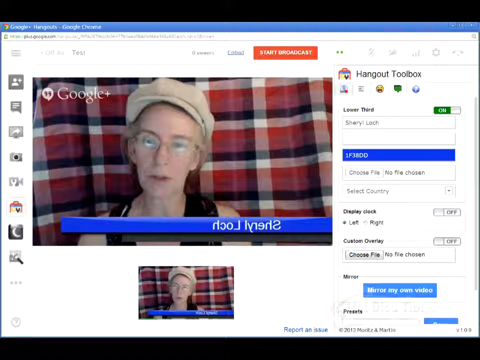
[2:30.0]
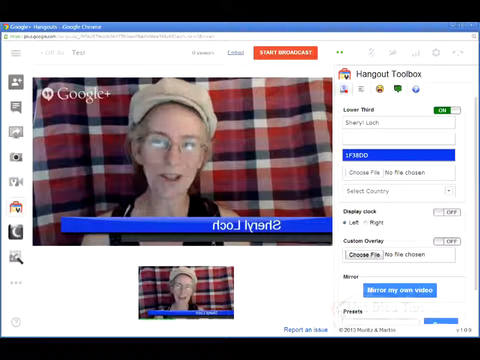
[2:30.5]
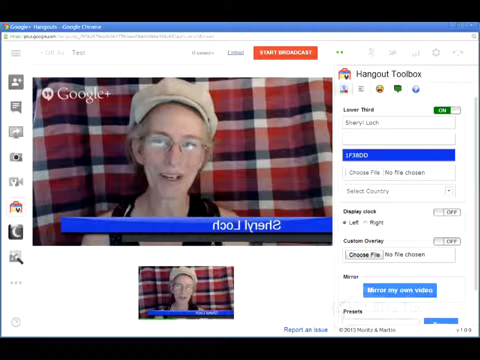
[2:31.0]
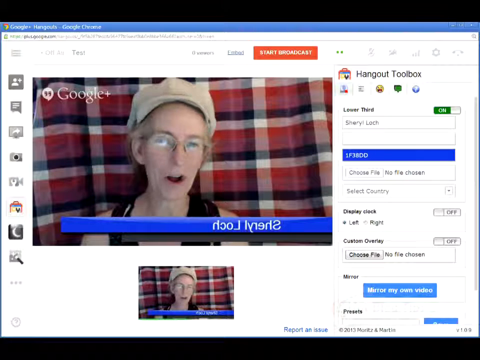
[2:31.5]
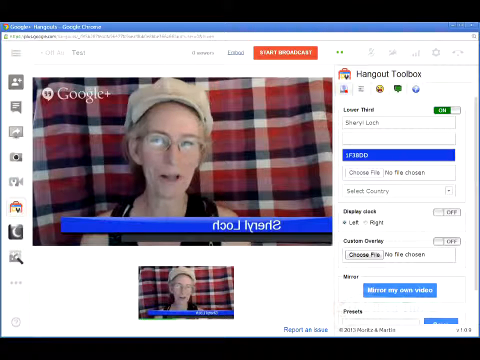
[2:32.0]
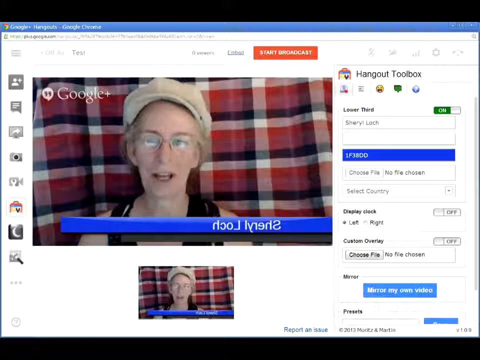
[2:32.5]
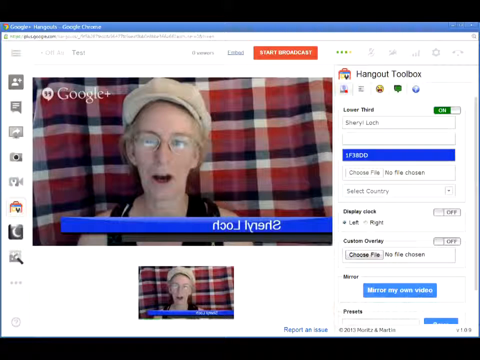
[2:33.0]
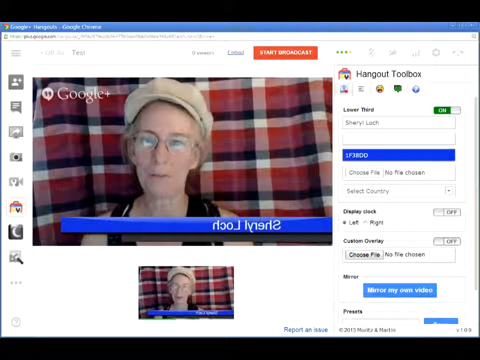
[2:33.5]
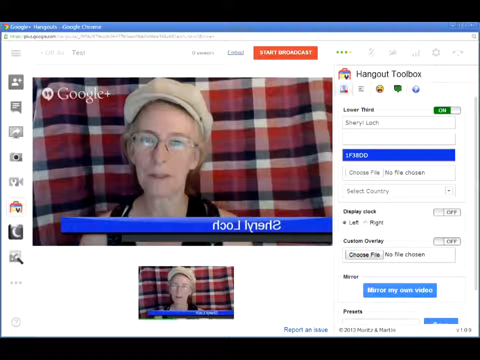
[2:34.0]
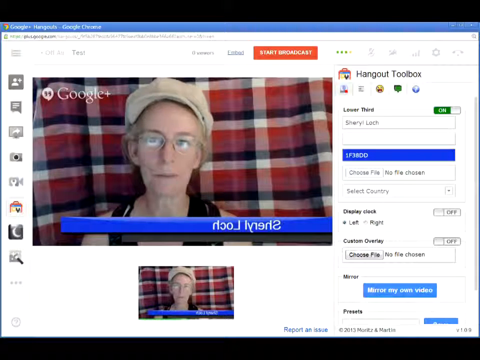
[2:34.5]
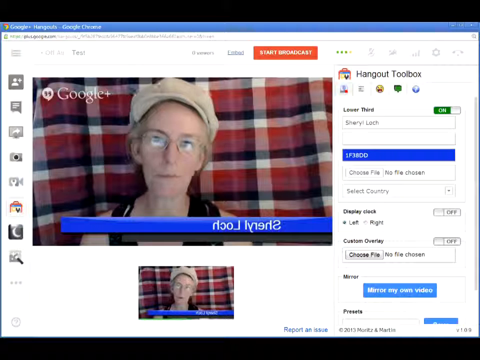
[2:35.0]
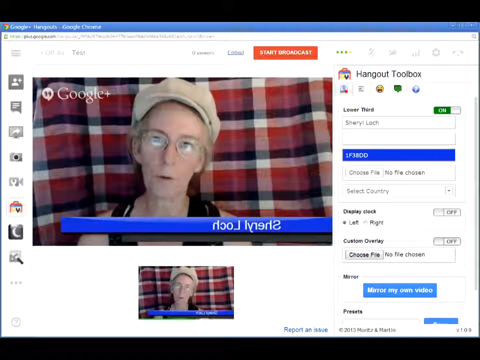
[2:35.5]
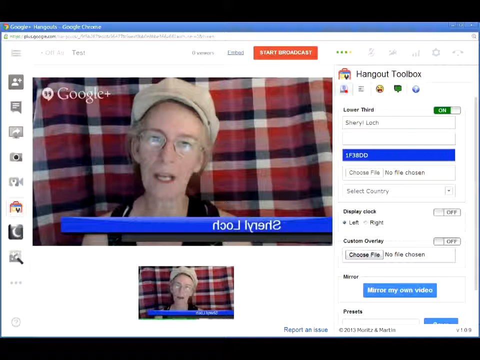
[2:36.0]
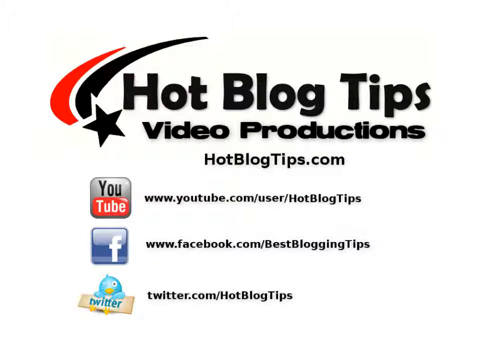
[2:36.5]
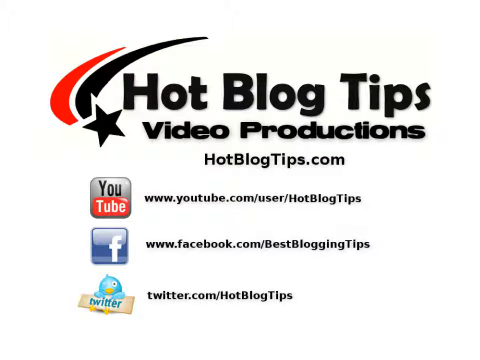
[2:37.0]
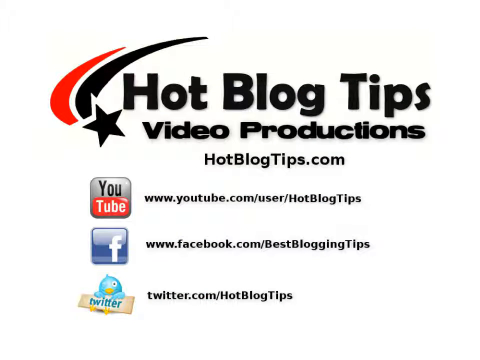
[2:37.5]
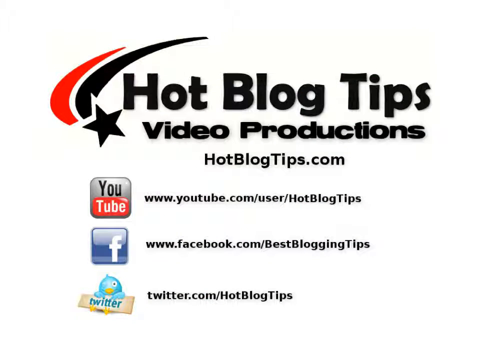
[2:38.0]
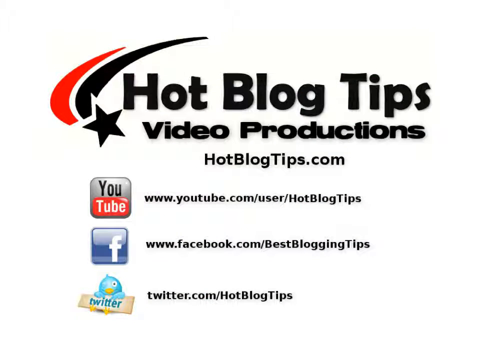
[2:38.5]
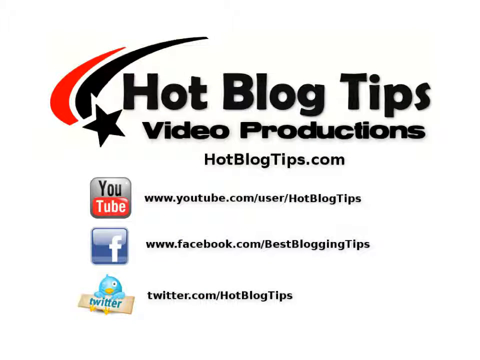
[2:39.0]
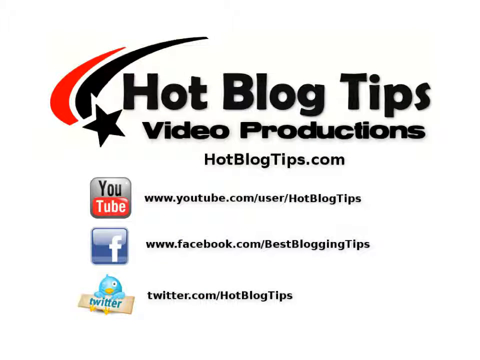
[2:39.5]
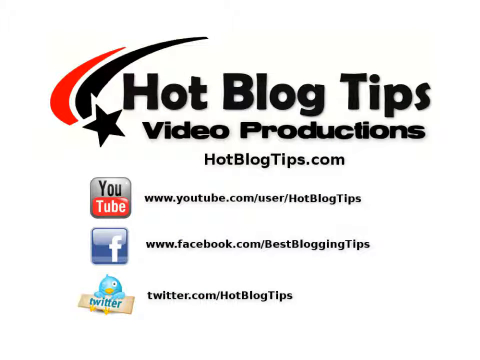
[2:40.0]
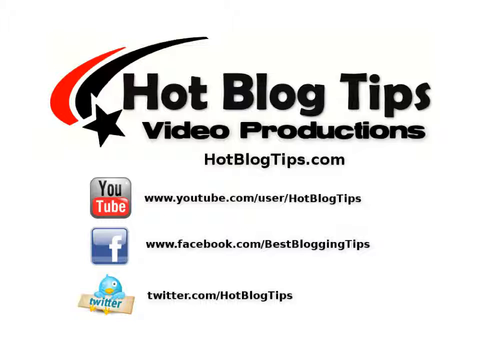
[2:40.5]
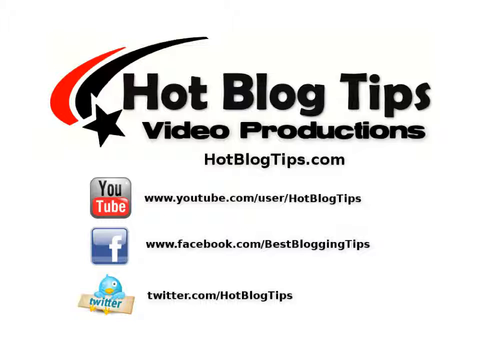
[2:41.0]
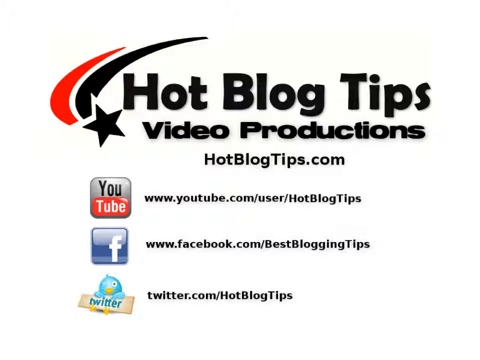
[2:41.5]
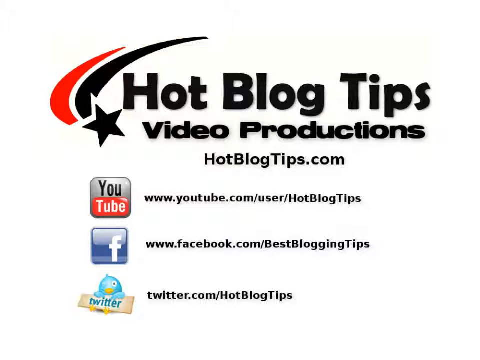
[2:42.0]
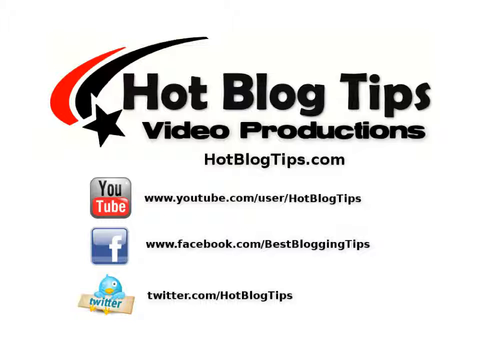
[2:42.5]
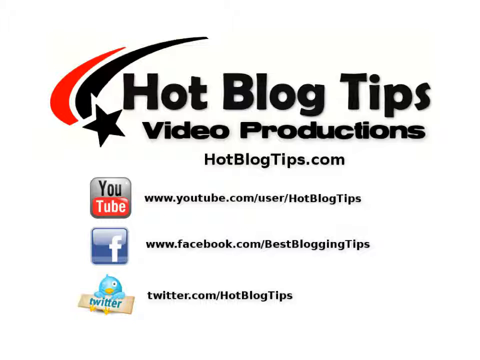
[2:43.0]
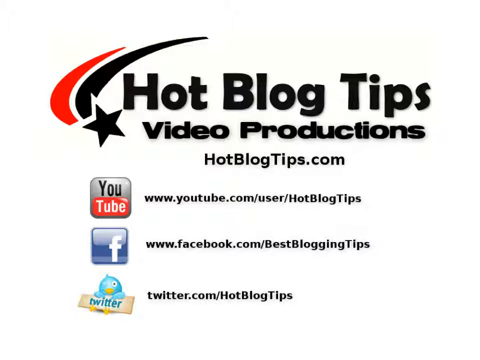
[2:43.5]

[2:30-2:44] A video shows the user wearing a hat, glasses and a black vest, talking, maybe about how to use the Hangout toolbox. The background of her video is red, the same color as in her avatar. At the bottom of her video is a blue banner showing her name as a mirrored image. On the right side a panel shows features or functions that cannot be made out clearly because of the poor quality; at the bottom it apparently says "custom overlay," with a choose-file option. The view then switches to another screen reading "hot blog tips, video productions," showing YouTube, Facebook and Twitter pointing to the tips.